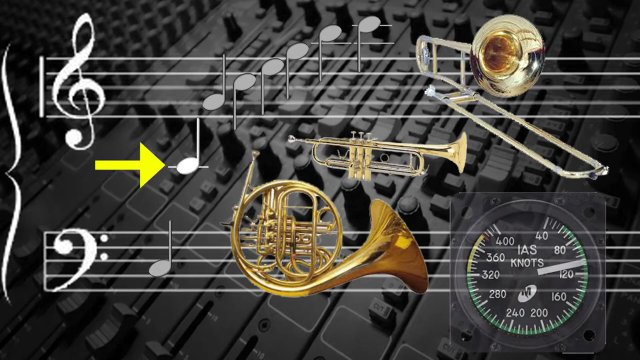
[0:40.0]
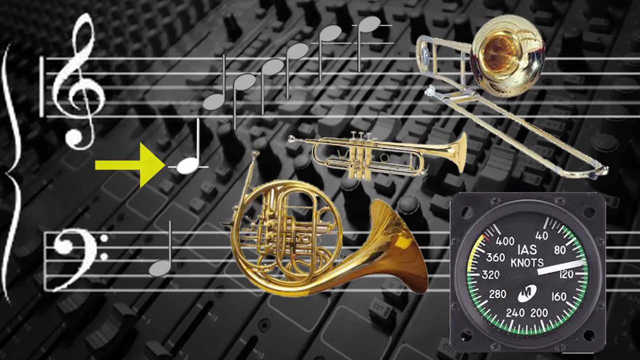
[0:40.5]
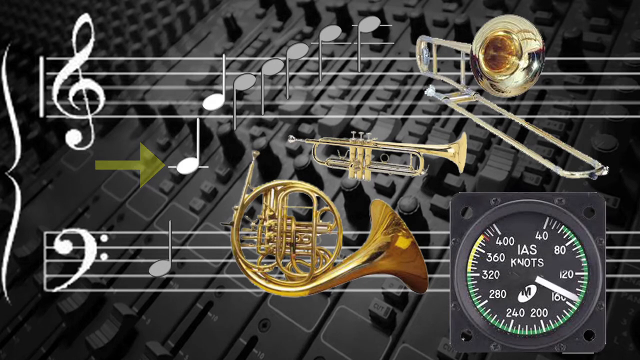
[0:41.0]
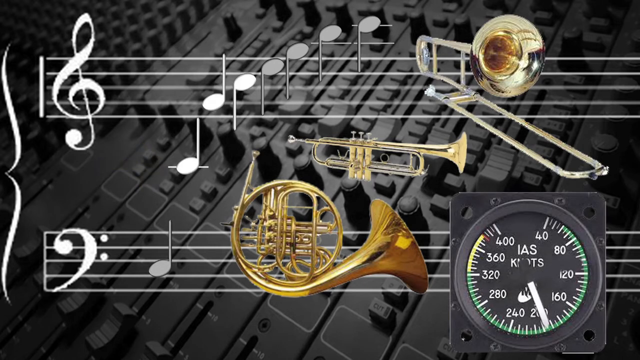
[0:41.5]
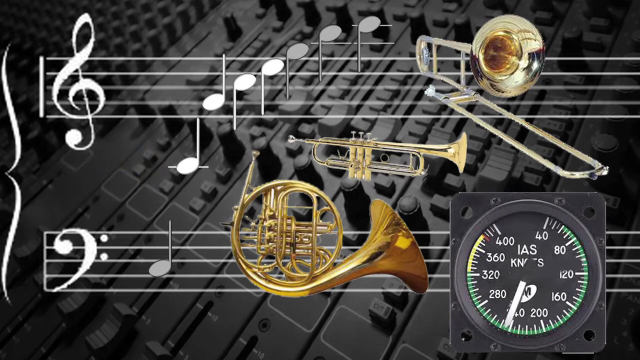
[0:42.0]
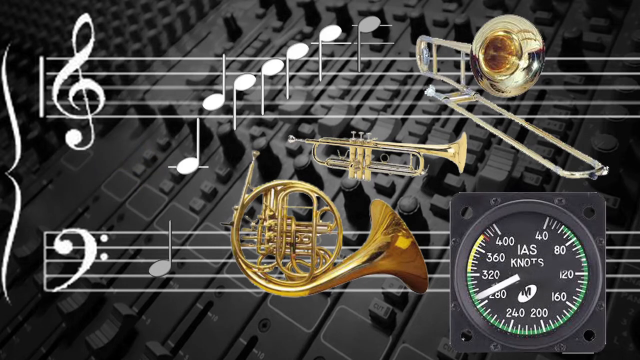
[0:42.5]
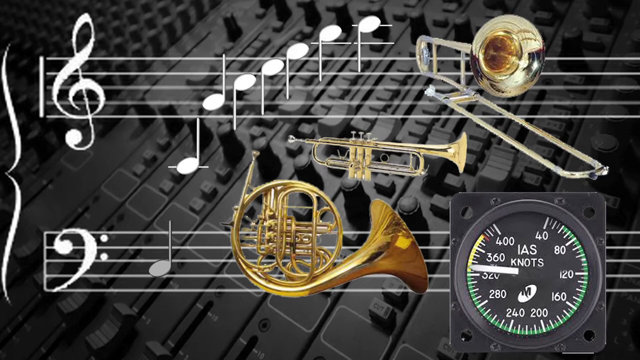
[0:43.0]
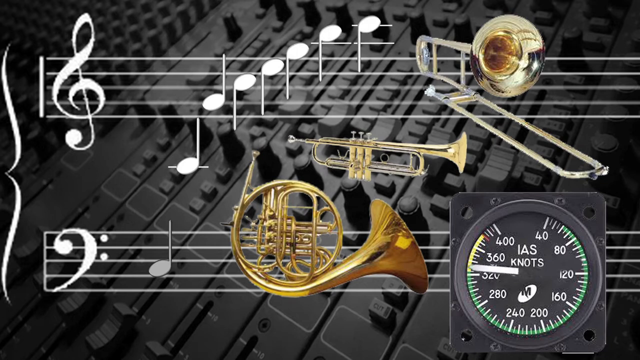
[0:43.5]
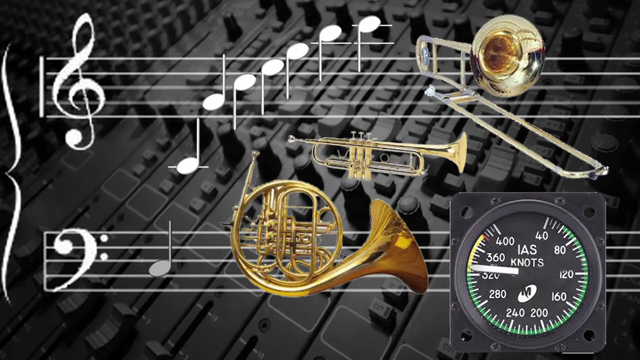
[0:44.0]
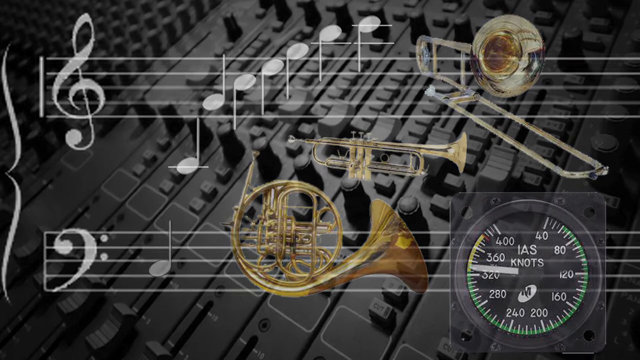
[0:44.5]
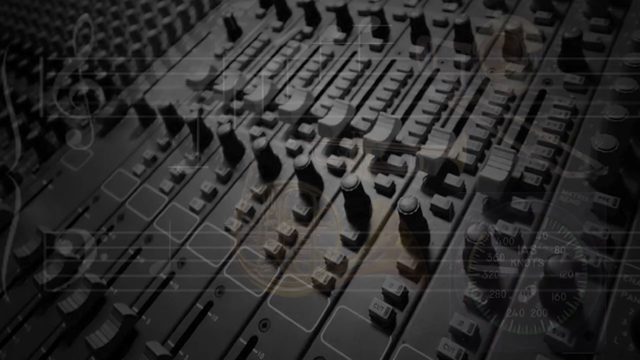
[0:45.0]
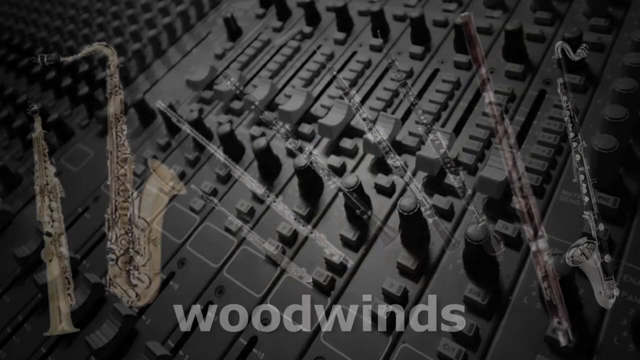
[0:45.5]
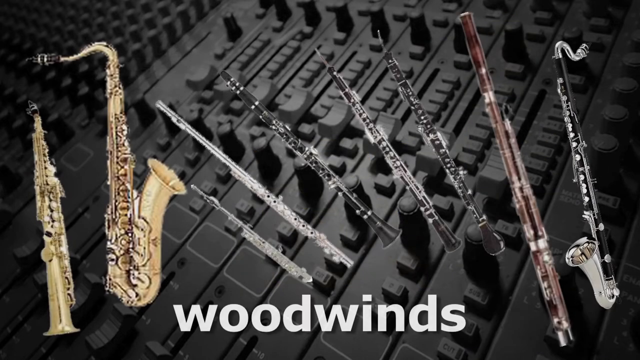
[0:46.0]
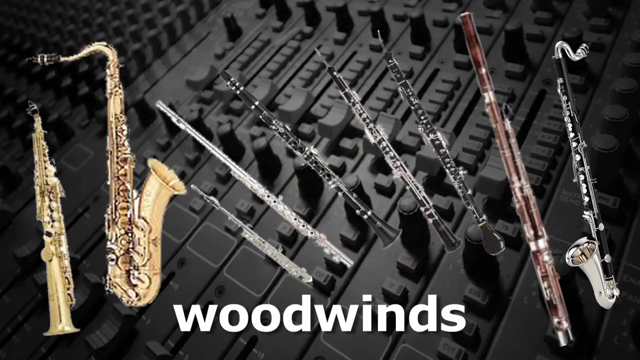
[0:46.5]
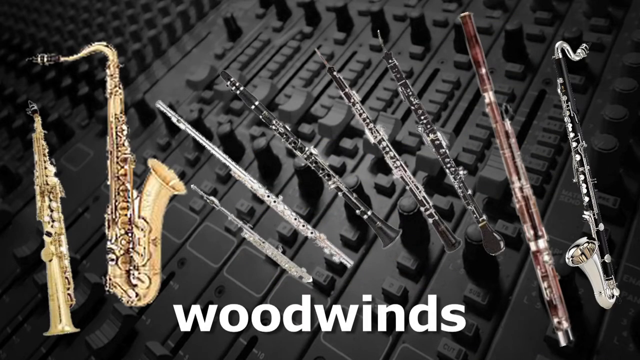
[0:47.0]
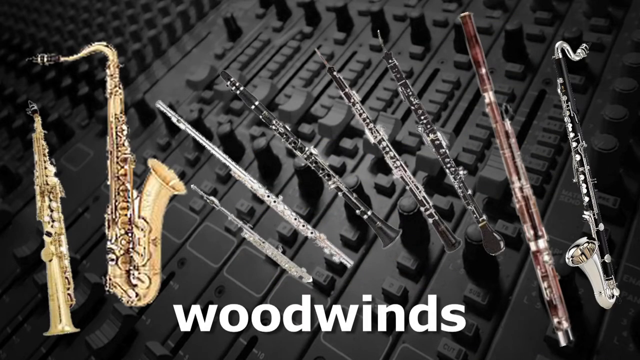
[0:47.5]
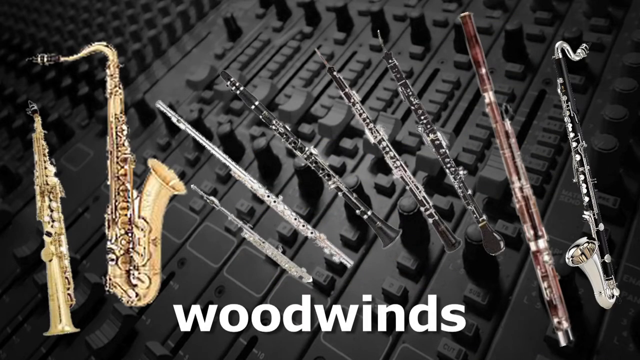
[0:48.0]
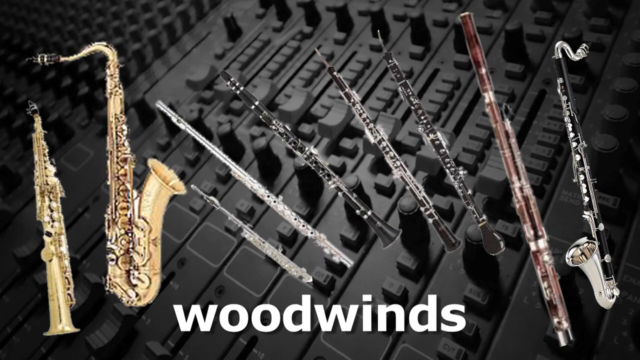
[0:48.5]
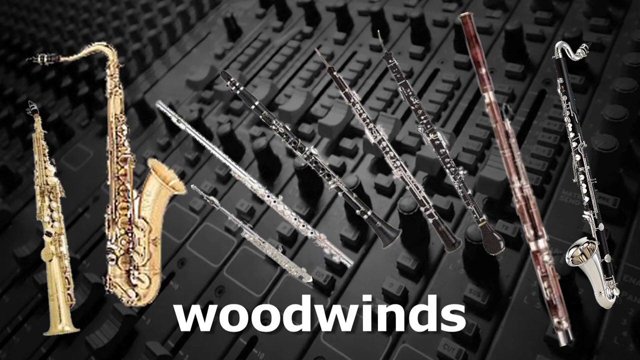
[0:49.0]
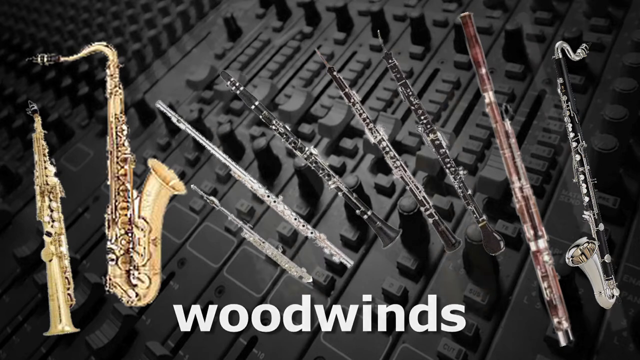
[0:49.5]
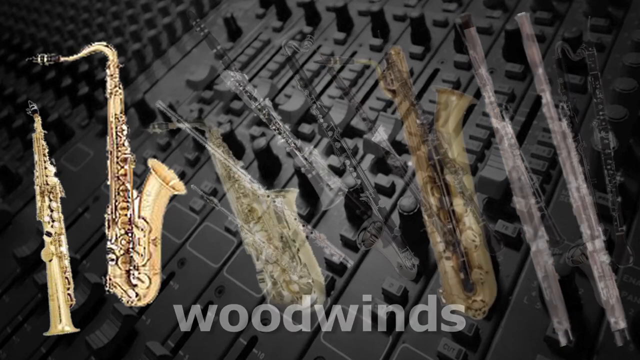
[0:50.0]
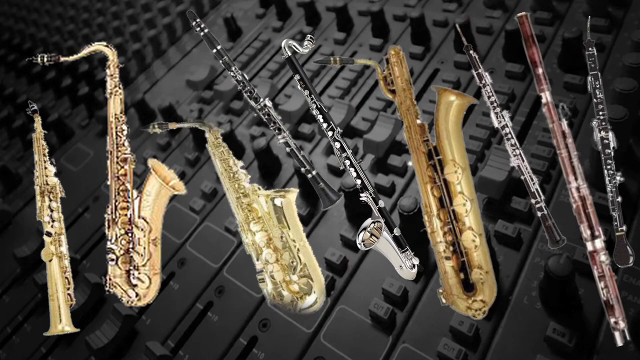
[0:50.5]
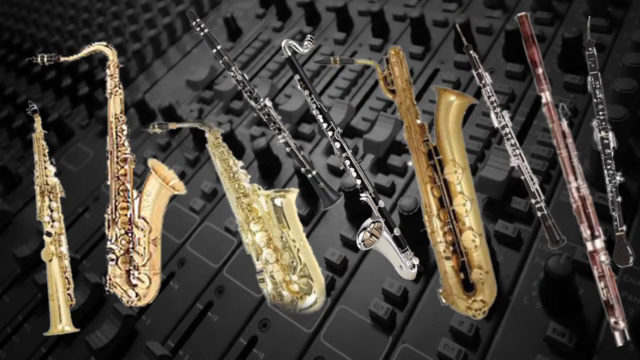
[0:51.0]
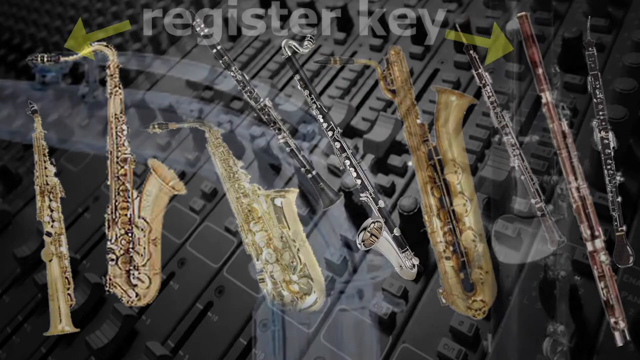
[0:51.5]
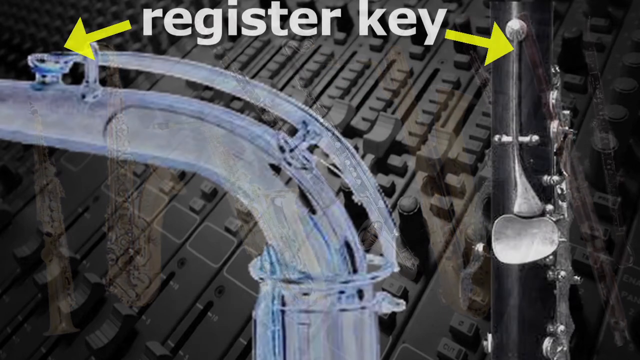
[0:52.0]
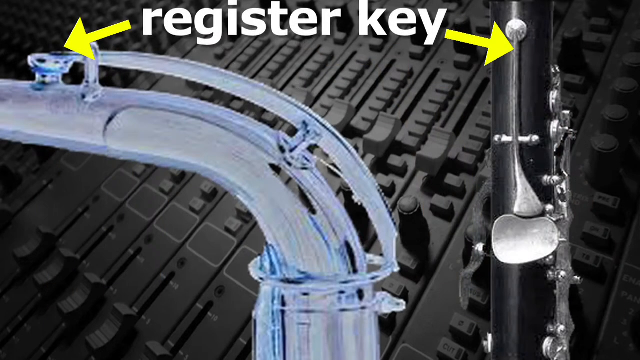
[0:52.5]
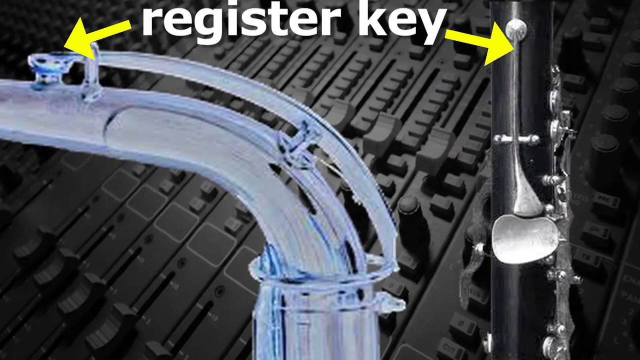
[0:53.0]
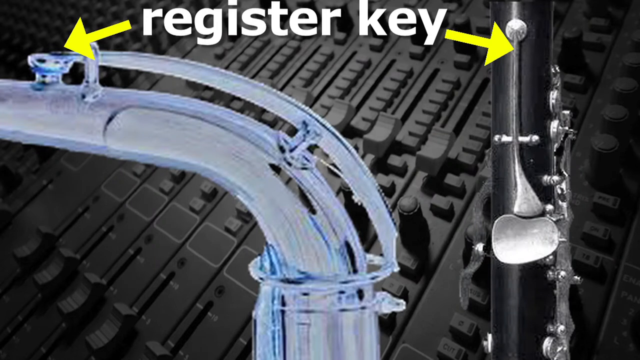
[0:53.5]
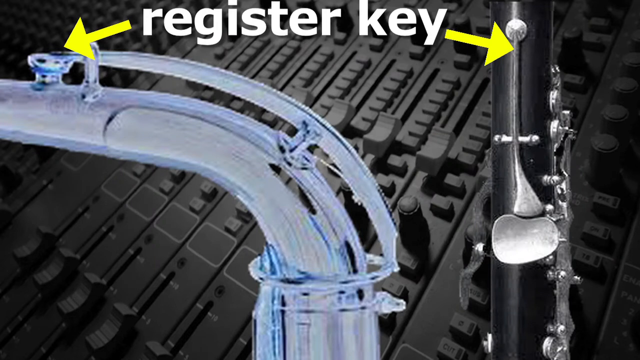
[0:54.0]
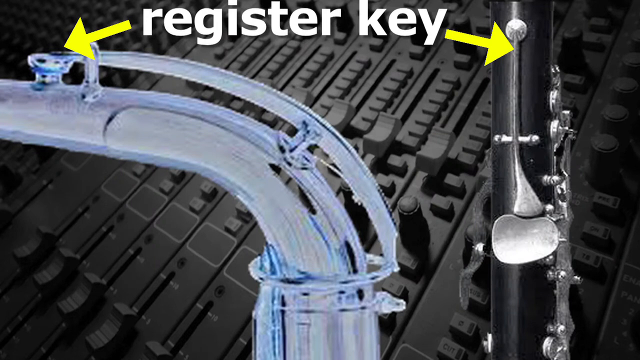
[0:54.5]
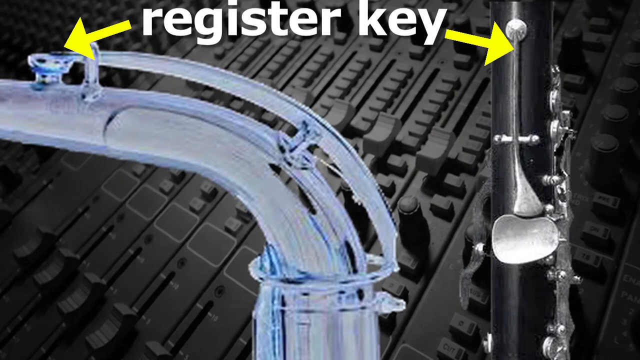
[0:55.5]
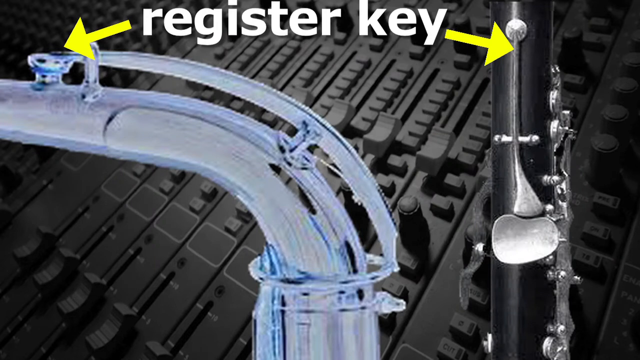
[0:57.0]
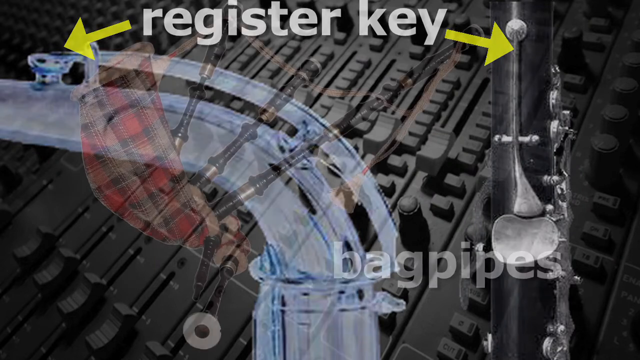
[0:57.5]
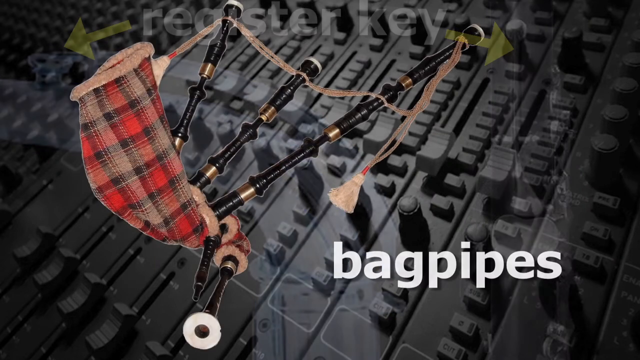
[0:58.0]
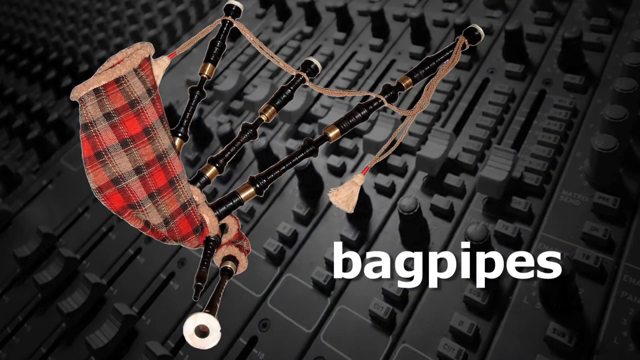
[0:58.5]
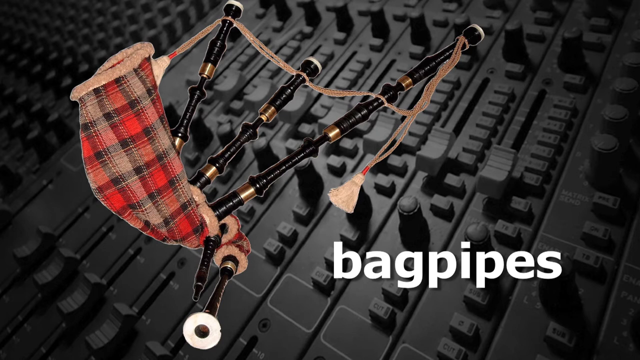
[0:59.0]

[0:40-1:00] In the bottom right, beneath the trombone and to the right of the French horn, is what looks like a gauge. It is round, with a black face marked with white and green lines, and it reads "IAS knots". The scale starts at 40 and goes up to 400, and the arrow moves quickly up. Next, "woodwinds" appears in white text along the bottom, with a variety of woodwind instruments such as saxophones, clarinets, flutes, oboes and bassoons. A close-up follows with what looks like the text "register key" at the top center of the frame, with yellow arrows pointing toward the register keys on two instruments, one arrow pointing left and one pointing right. The video then transitions to traditional bagpipes with a red plaid design on the bag.